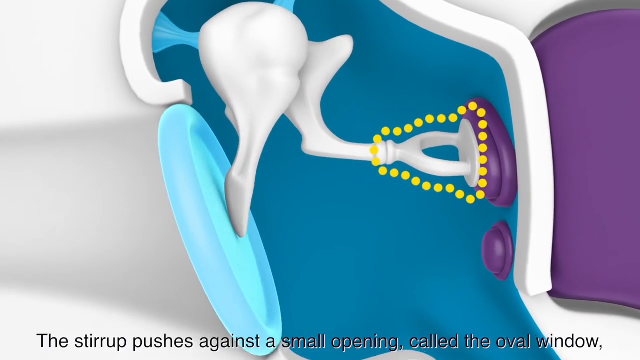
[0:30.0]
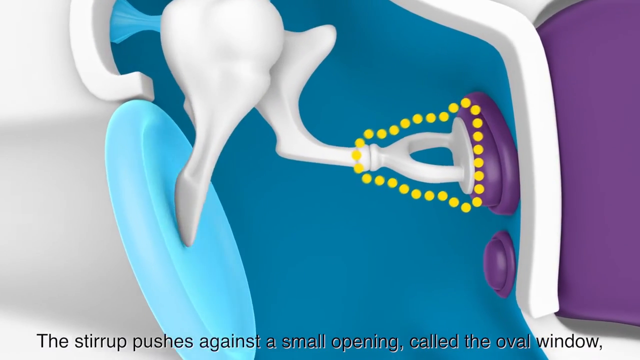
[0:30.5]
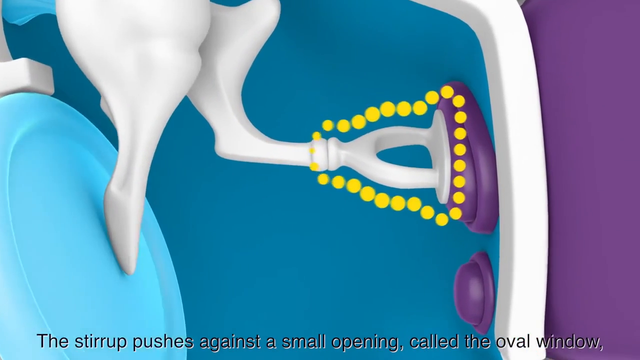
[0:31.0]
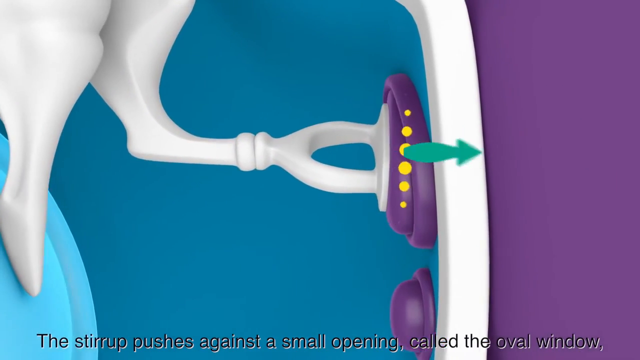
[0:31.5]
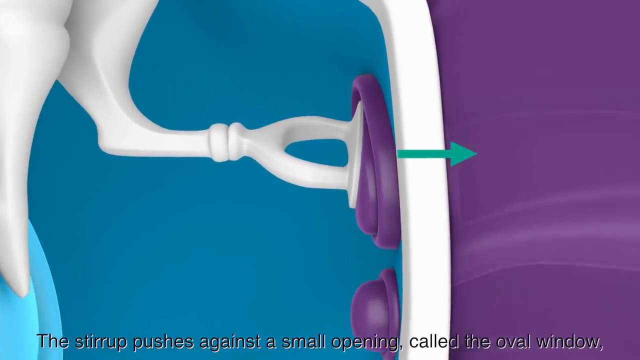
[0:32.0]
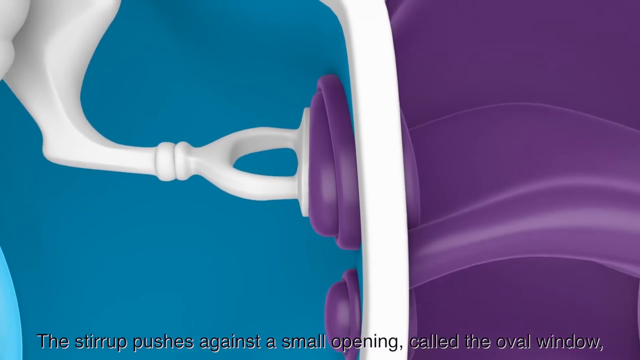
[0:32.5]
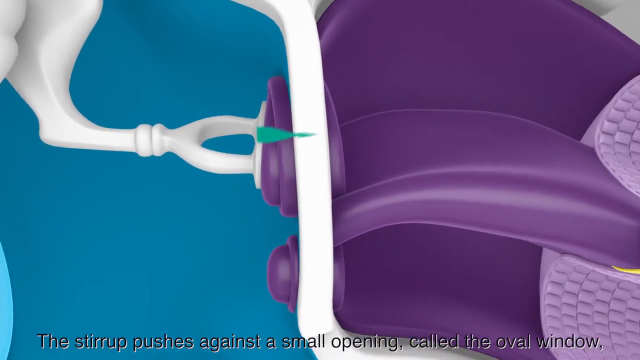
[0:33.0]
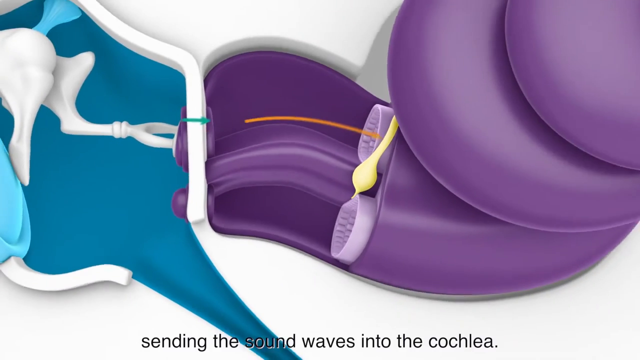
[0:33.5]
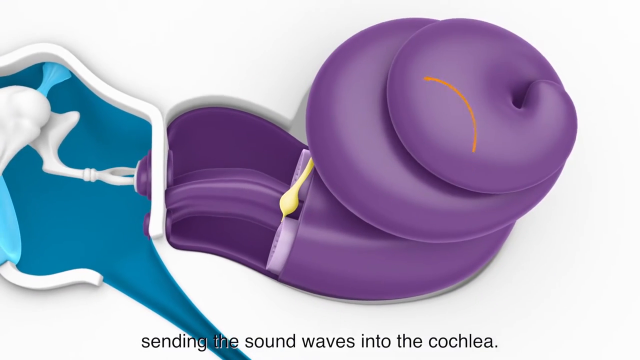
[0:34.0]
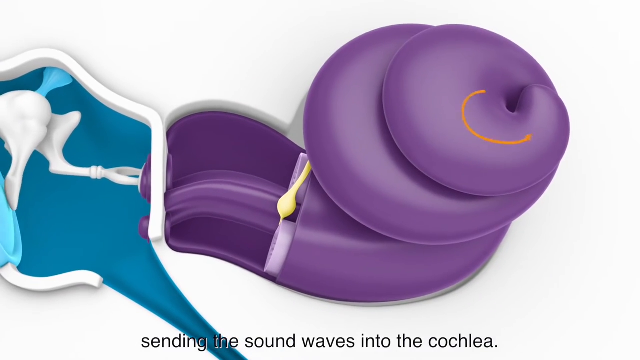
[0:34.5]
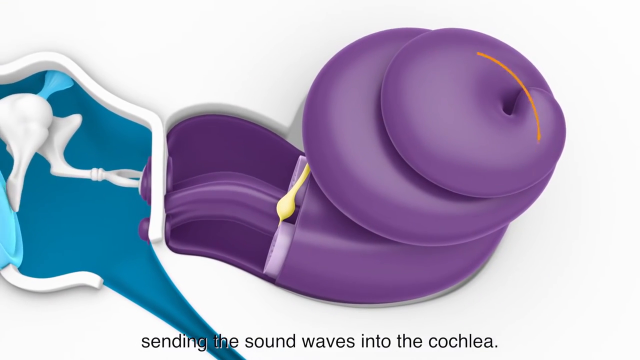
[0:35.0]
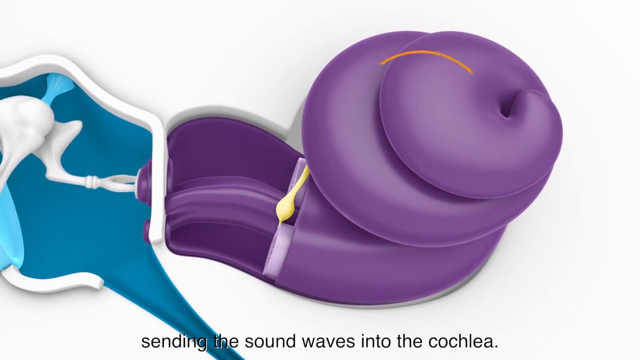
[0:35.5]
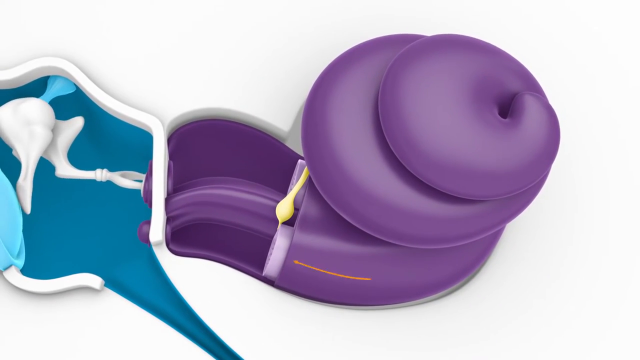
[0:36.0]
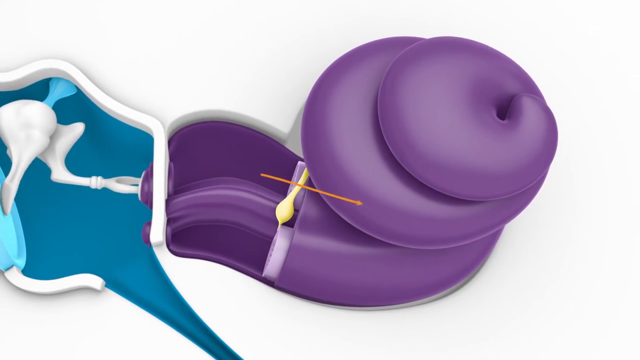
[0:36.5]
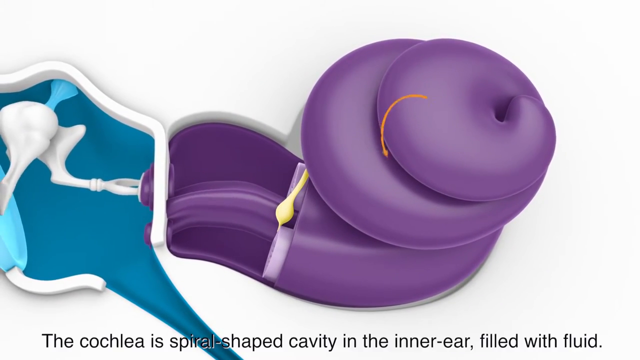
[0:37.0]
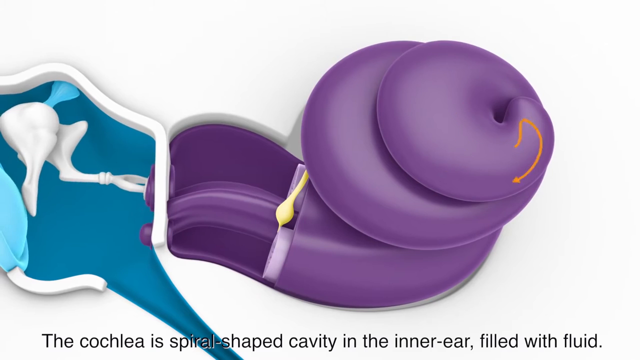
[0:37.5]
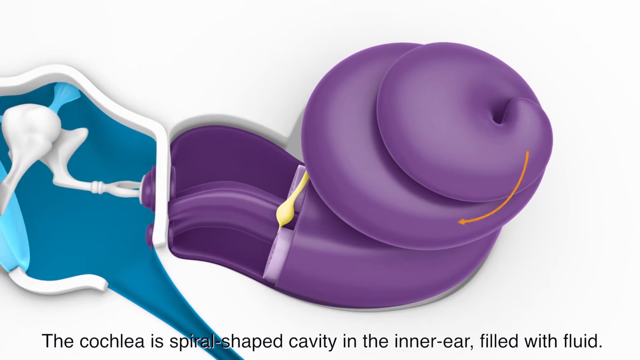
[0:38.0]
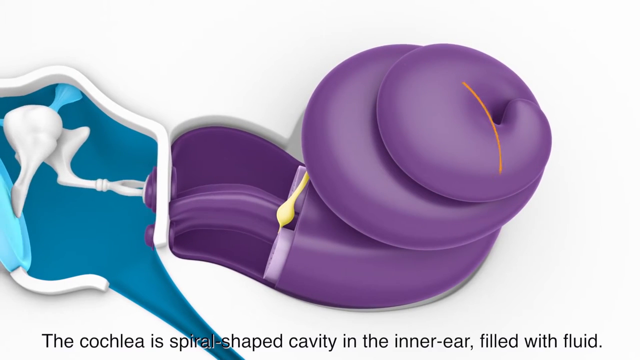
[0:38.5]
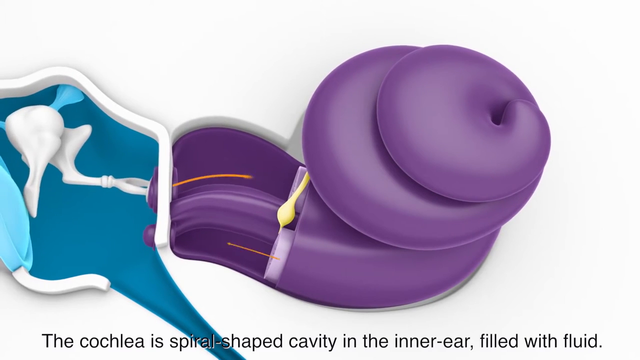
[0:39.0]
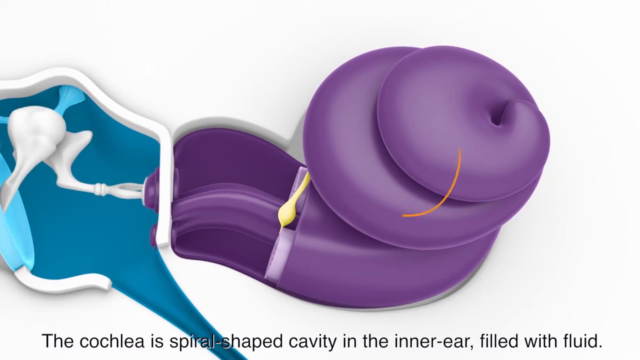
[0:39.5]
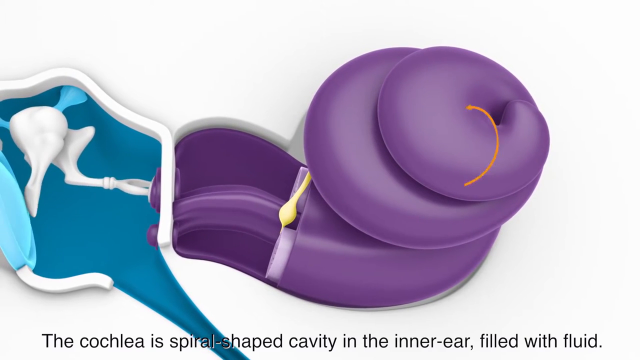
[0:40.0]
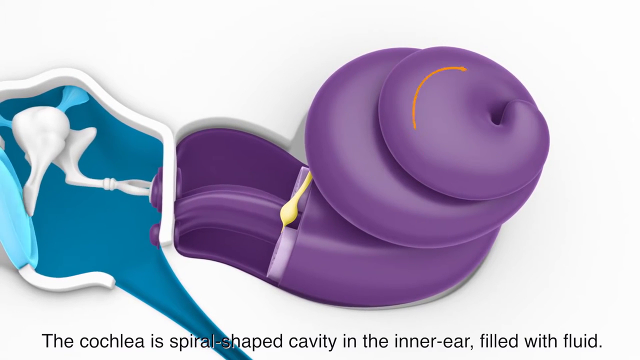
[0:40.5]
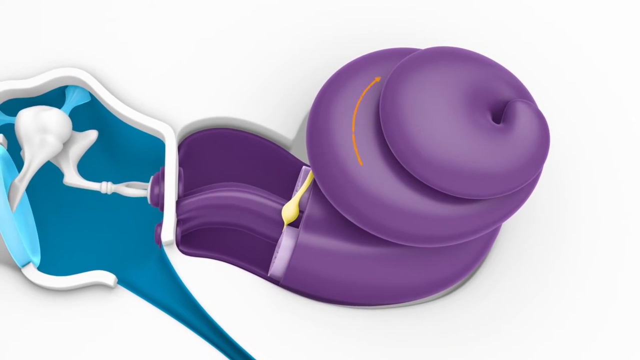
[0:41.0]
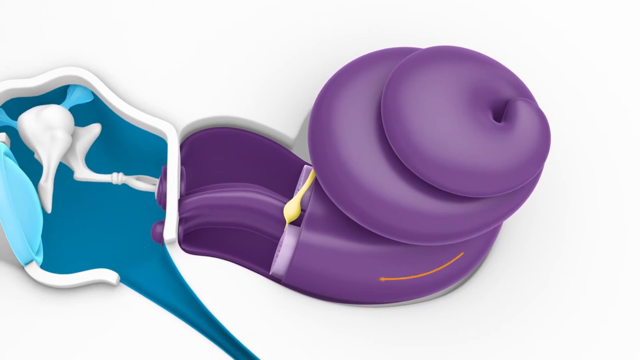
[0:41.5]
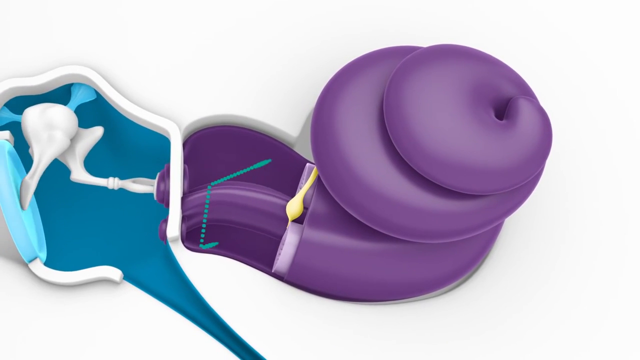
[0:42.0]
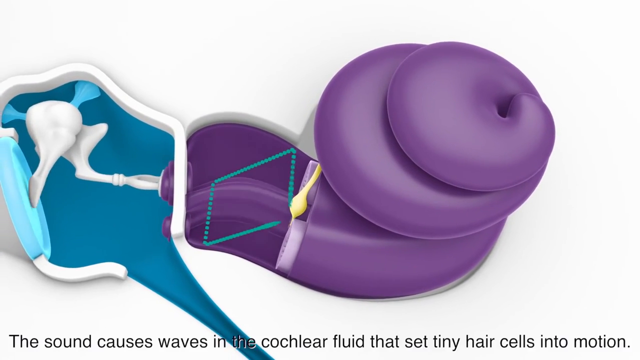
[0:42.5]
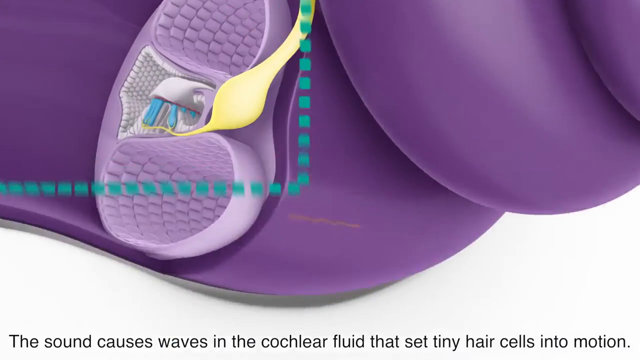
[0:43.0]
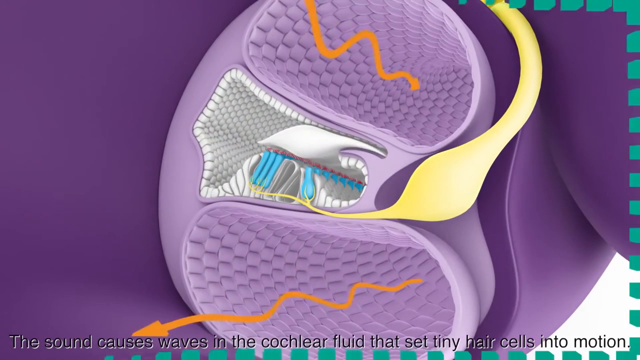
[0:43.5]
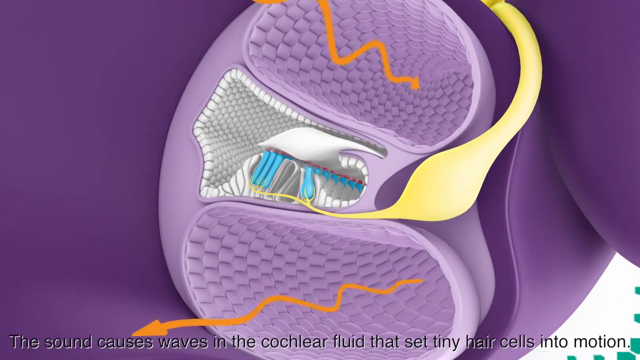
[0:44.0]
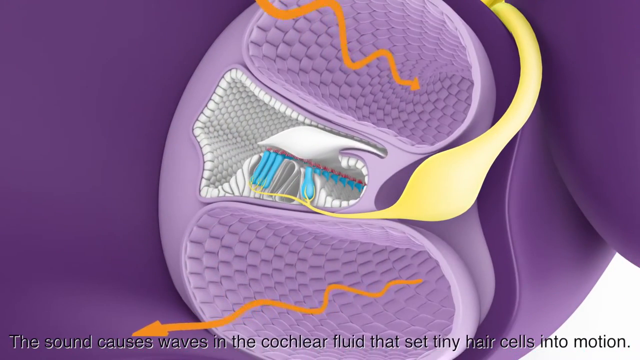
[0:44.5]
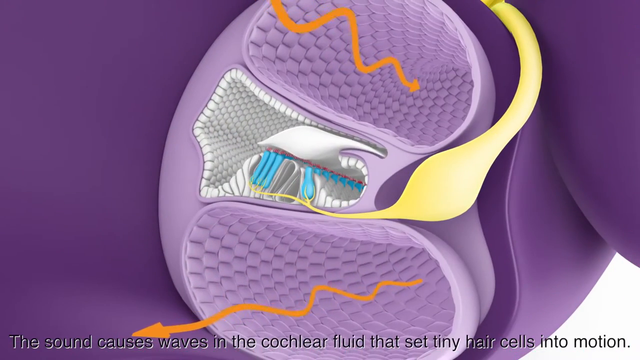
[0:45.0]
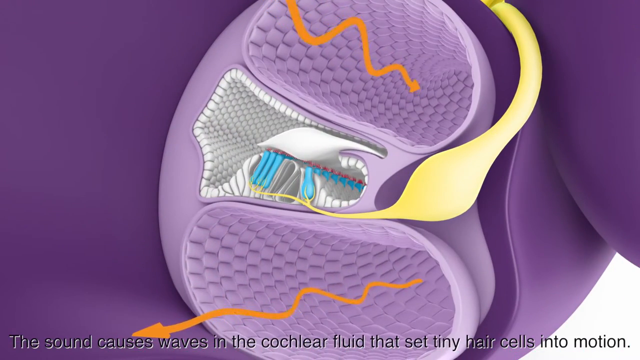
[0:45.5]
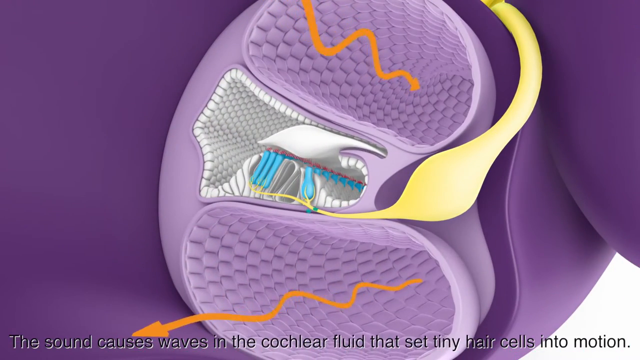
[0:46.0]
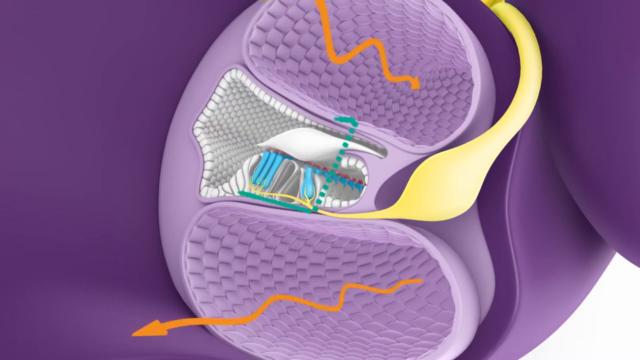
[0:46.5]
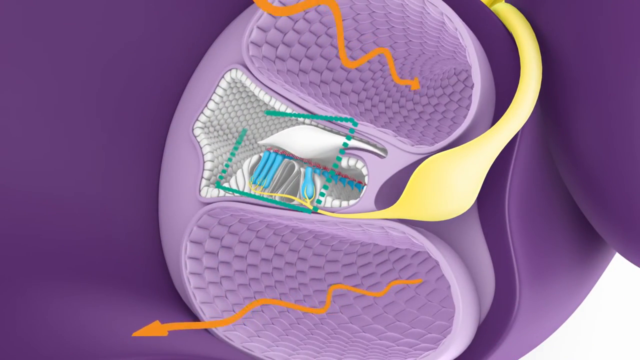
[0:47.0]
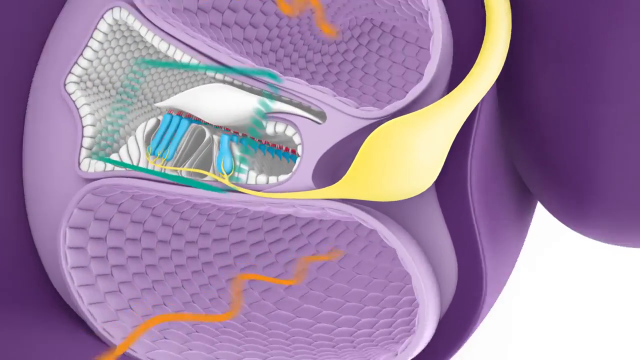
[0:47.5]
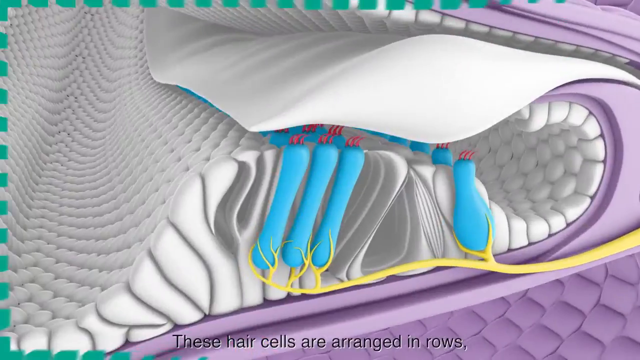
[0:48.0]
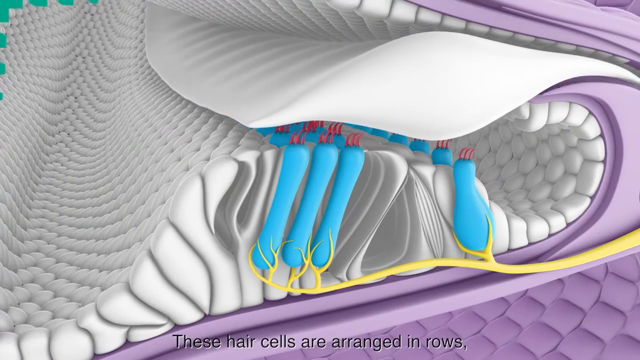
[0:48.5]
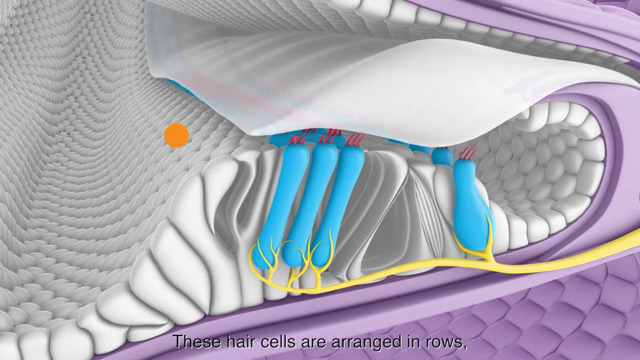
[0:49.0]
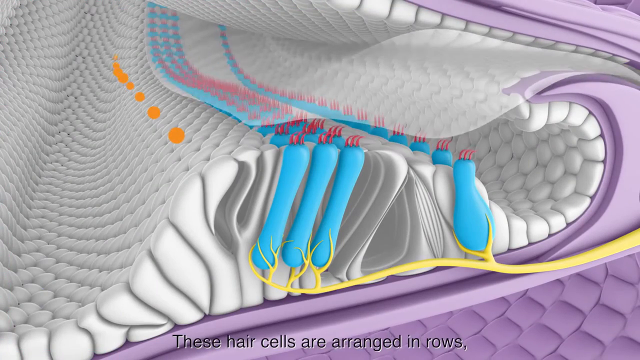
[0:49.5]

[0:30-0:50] The animation shows sound waves coming into the ear canal, hitting the eardrum, vibrating or pushing the anvil, and the vibrations moving along the stirrup. The colors include light blue, turquoise, white and purple. Yellow dots form around whichever part is being emphasized; here the stirrup is emphasized. A green arrow goes through part of the bone and into another organ, what looks like a cochlea, a spiral purple thing inside the head. An orange sound or arrow moves in and out multiple times in a repeating pattern; each time a sound wave comes in and goes through, the animation highlights another part inside the ear. A squiggly orange line with an arrow on it shows sound waves moving in. The video then zooms in on what looks like red filaments or hairs at the end of a blue protrusion: at one end is a red little hairy filament, and the other end looks like a yellow nerve.